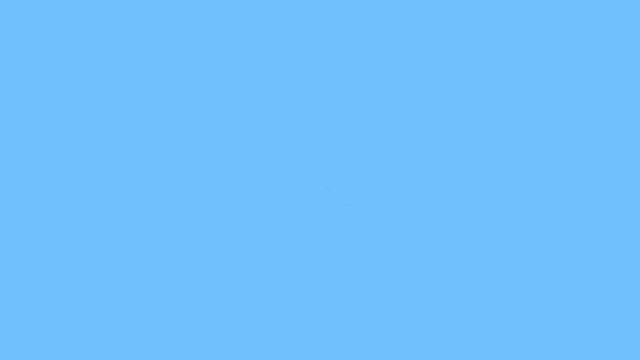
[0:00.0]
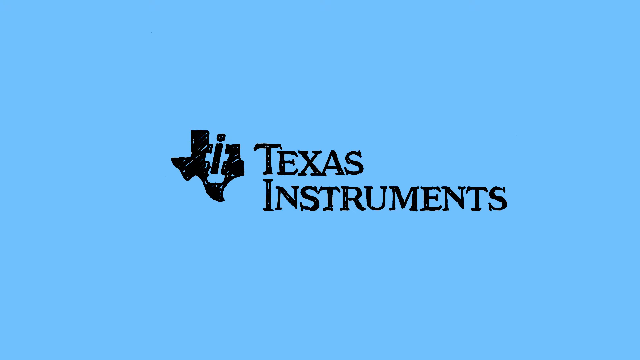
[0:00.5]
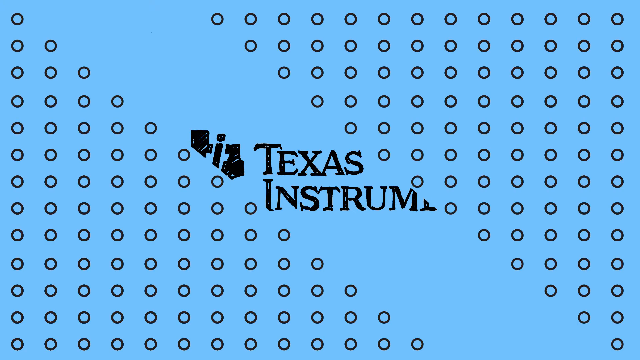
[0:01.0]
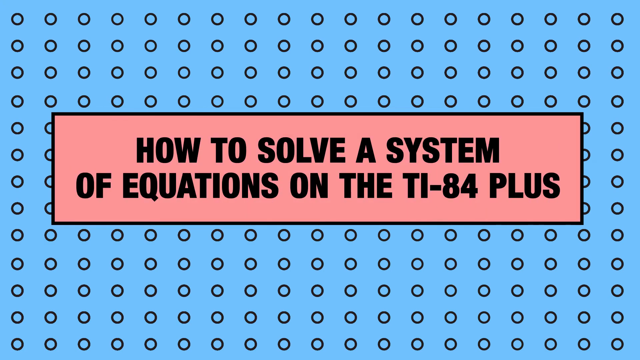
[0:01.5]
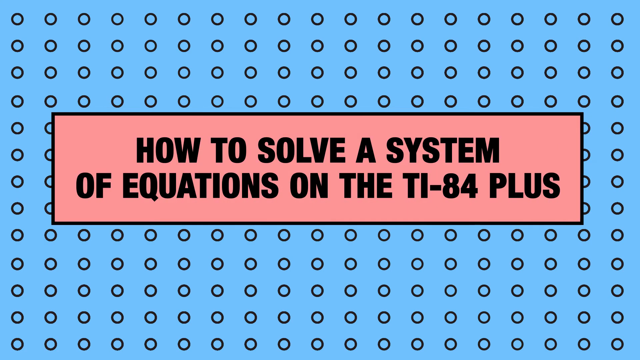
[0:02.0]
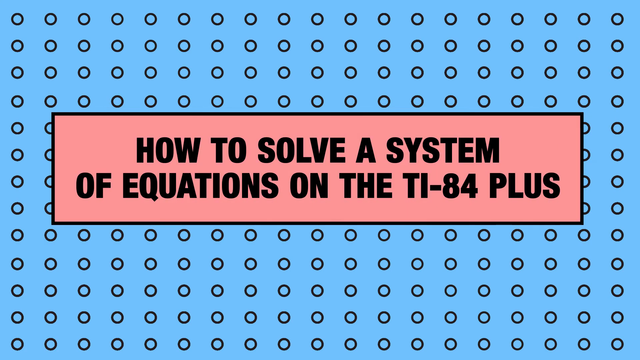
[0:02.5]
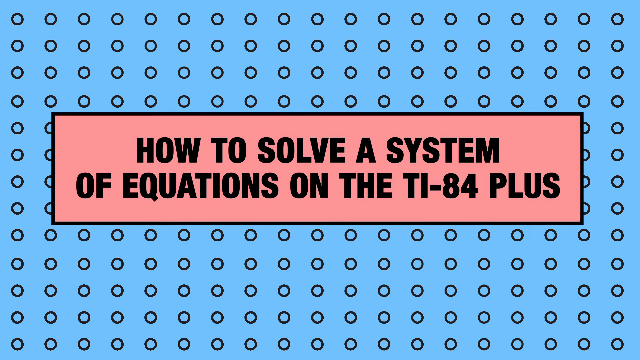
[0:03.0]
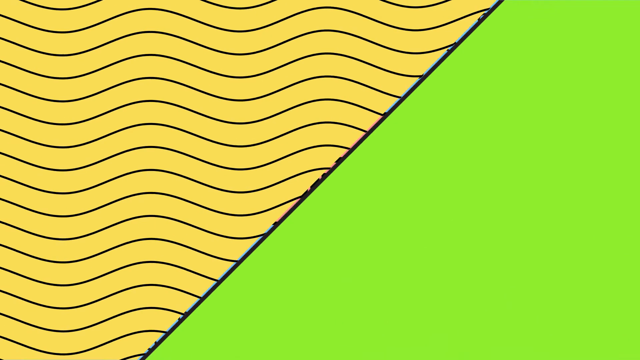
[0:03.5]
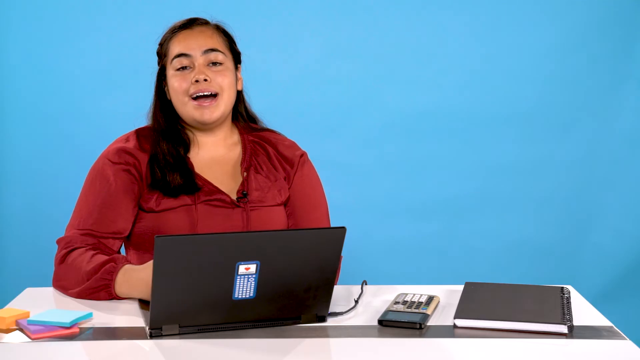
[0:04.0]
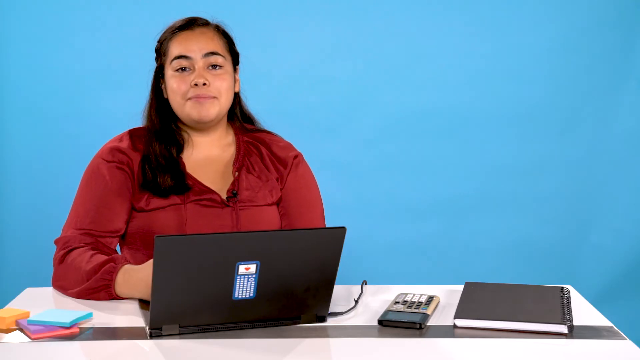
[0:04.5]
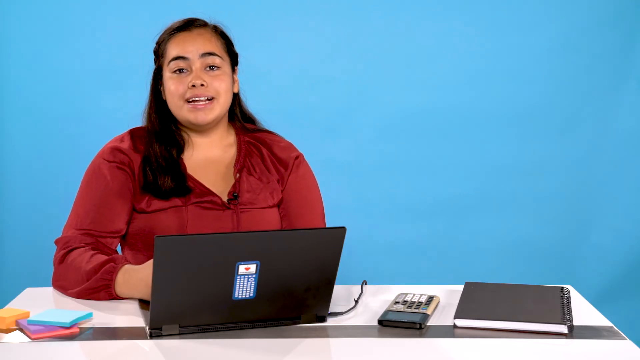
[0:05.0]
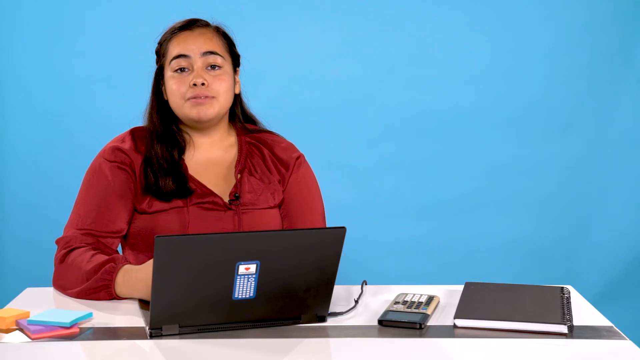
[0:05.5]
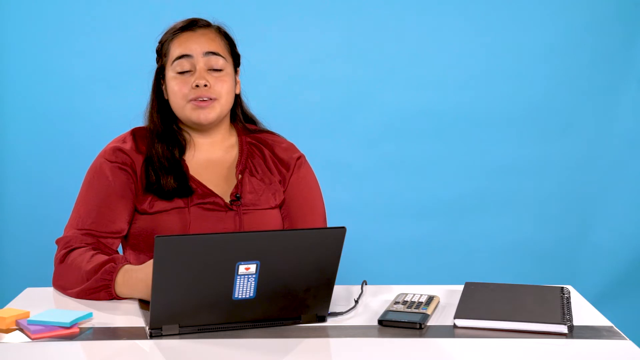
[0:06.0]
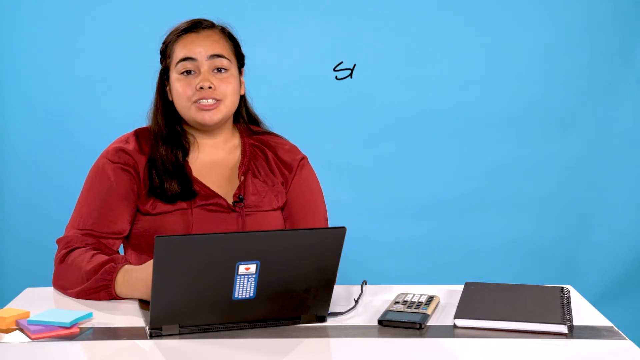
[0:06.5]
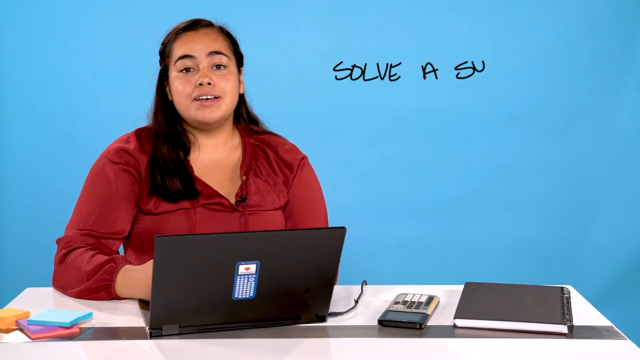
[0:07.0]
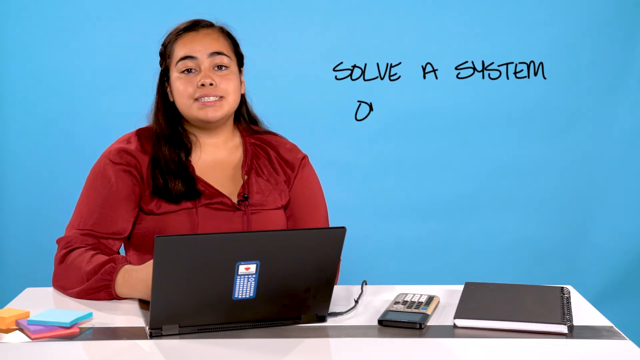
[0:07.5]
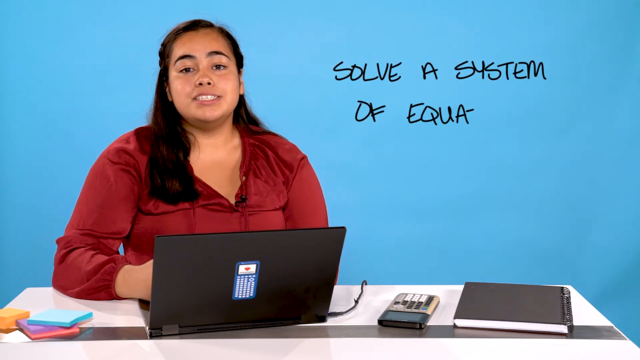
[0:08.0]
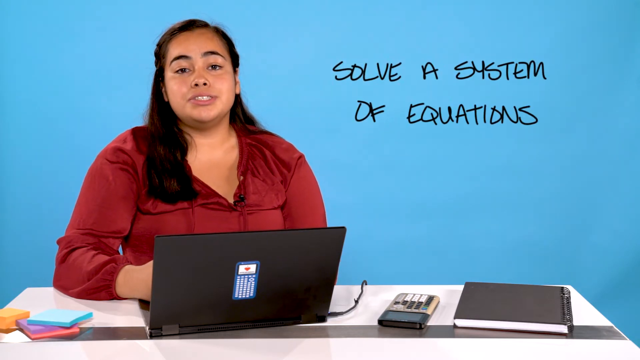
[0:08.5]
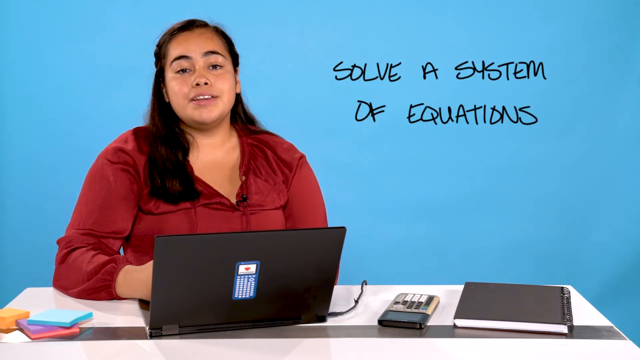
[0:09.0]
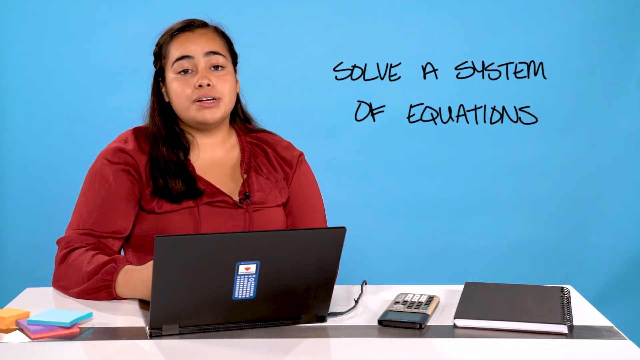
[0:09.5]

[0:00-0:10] The Texas Instruments name appears with its symbol, a little Texas emblem on the side, against a blue background with a bunch of circles. The title "how to solve a system of equations in the TI-84 Plus" is shown, with "how to solve a system of equations" written in pink. After a flash, a woman, maybe in her mid-twenties and slightly heavier set, is talking; she wears a red long-sleeve shirt. The words "solve a system of equations" are written in black, and everything has a blue background. In front of her are some post-it notes, a calculator, a notebook and her computer. She appears to be showing how to solve equations on a TI-84 Plus calculator.